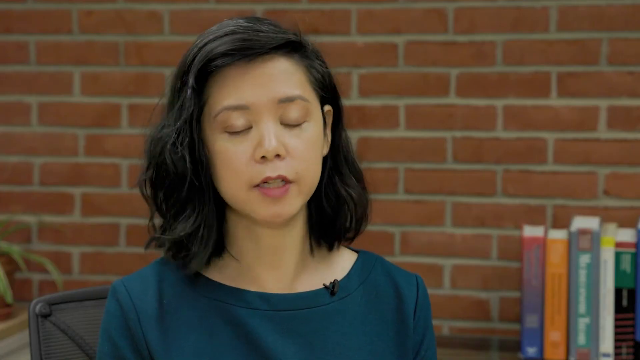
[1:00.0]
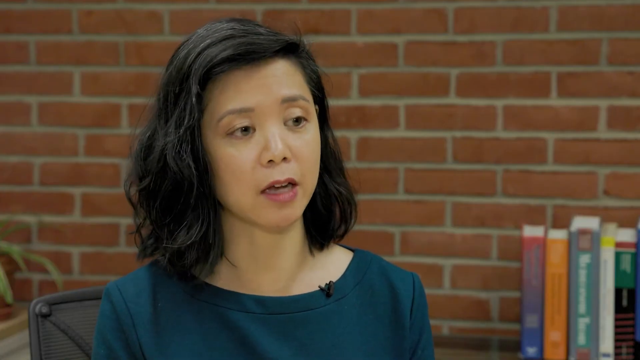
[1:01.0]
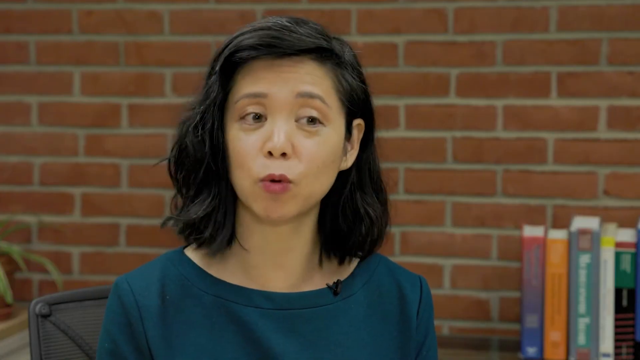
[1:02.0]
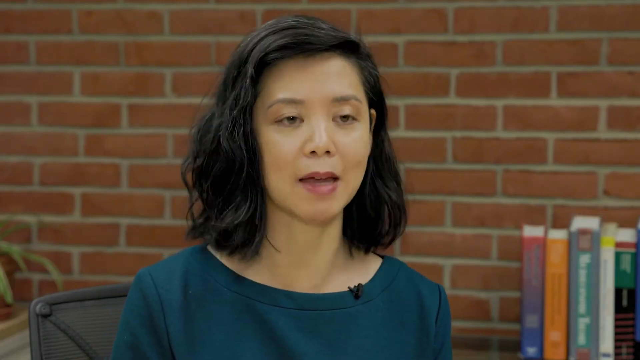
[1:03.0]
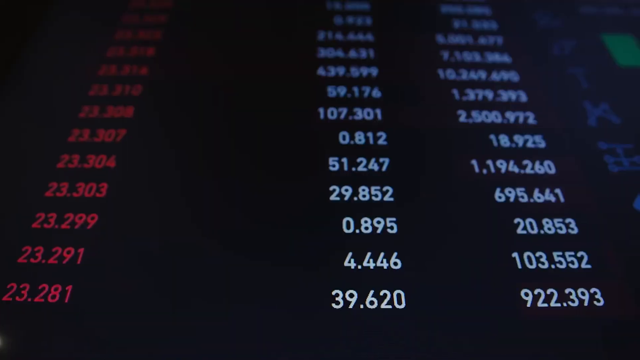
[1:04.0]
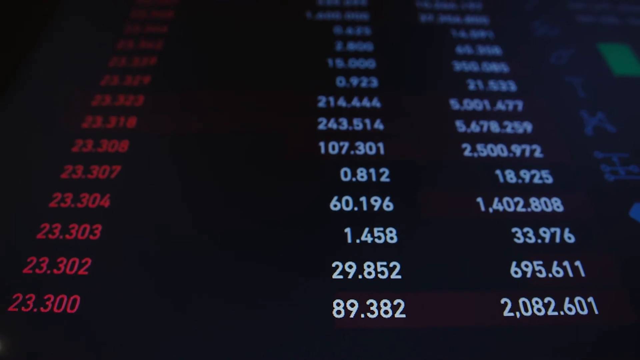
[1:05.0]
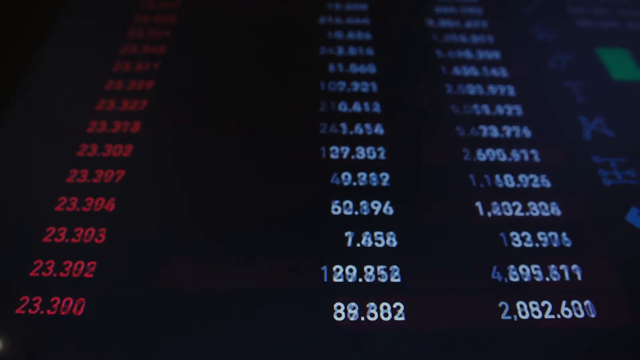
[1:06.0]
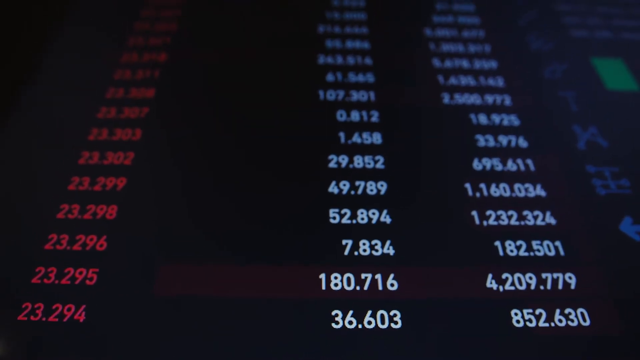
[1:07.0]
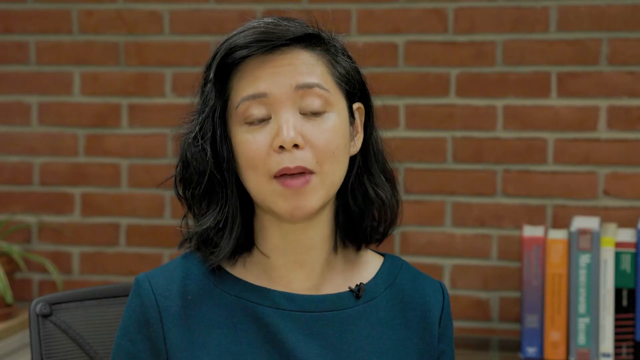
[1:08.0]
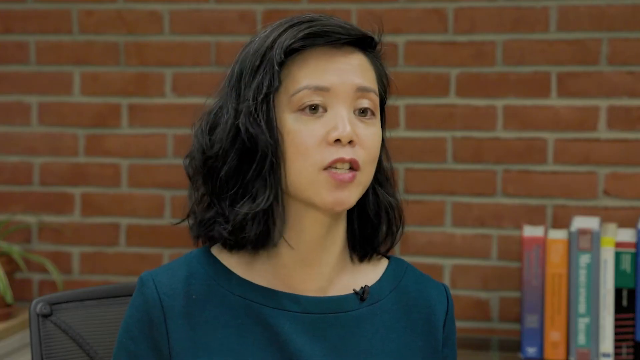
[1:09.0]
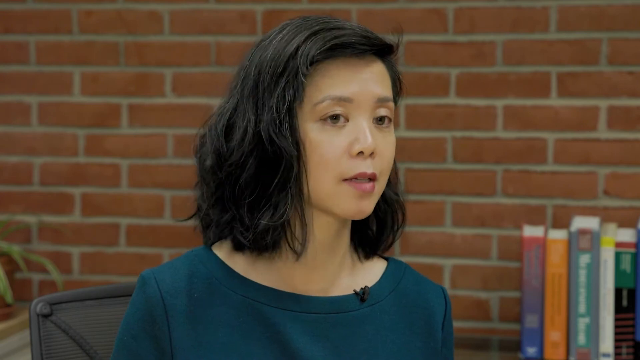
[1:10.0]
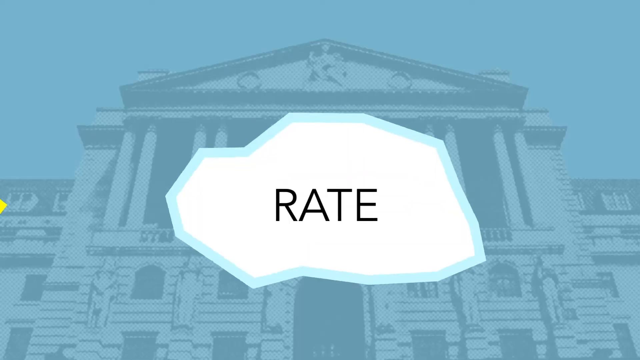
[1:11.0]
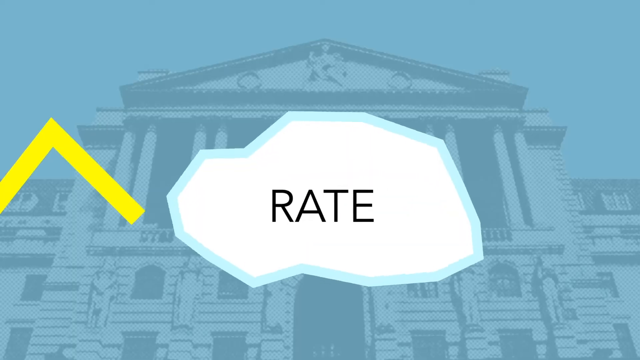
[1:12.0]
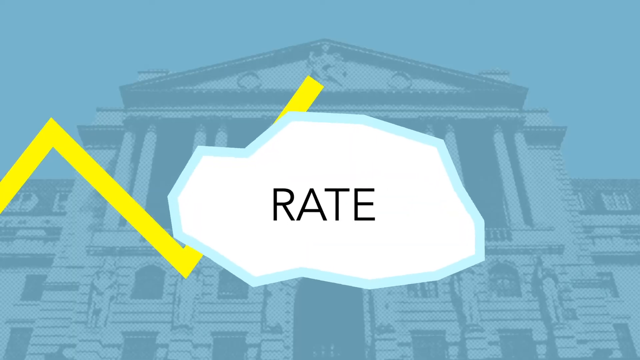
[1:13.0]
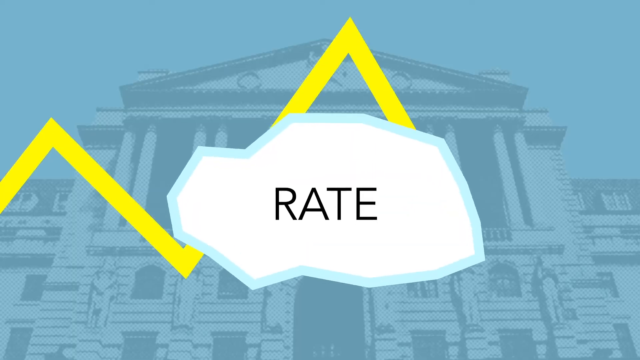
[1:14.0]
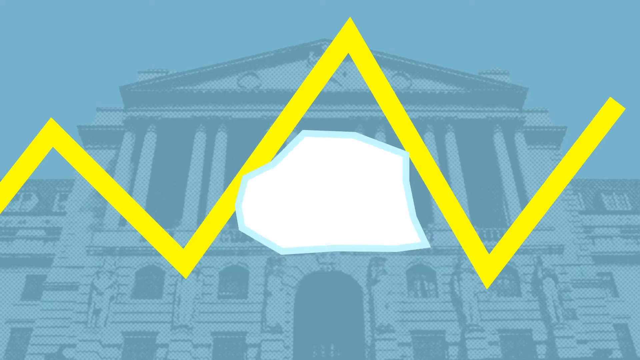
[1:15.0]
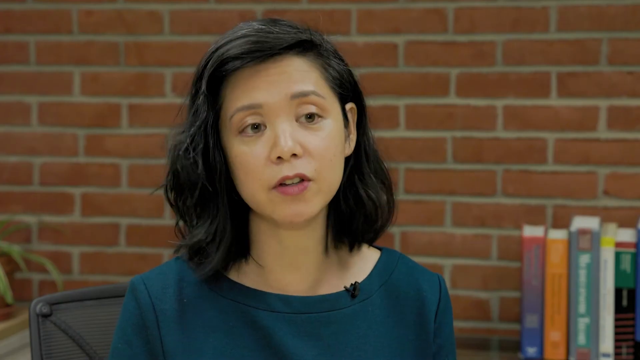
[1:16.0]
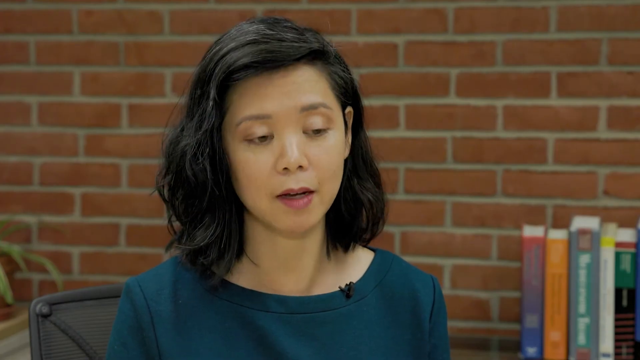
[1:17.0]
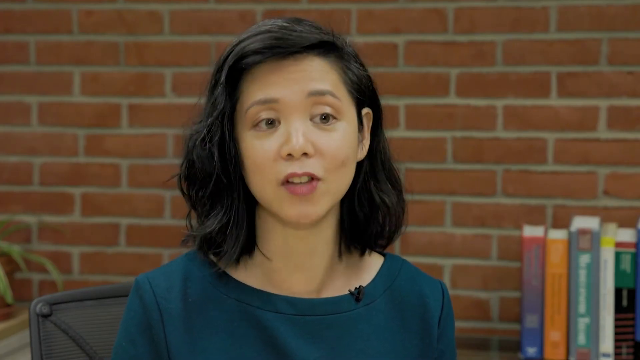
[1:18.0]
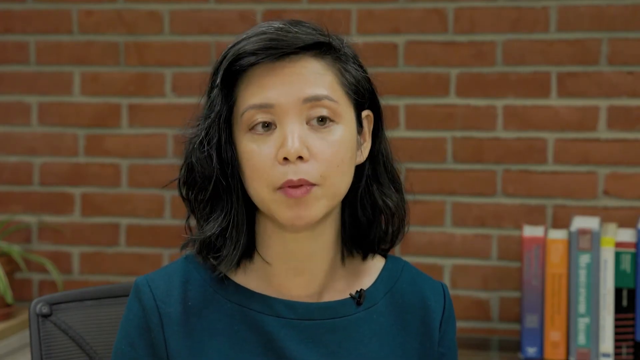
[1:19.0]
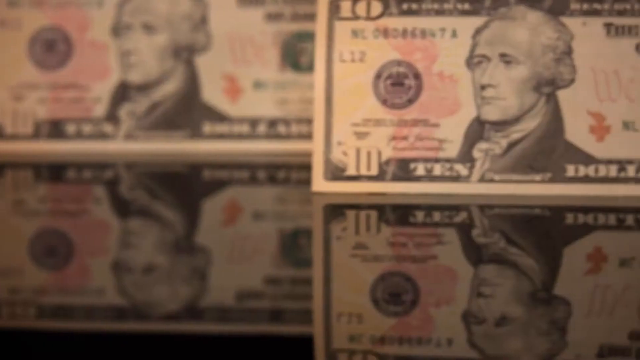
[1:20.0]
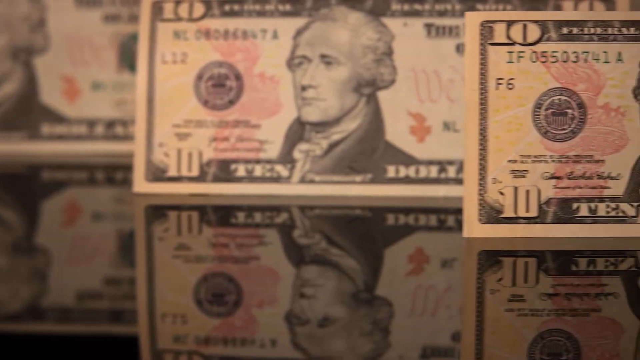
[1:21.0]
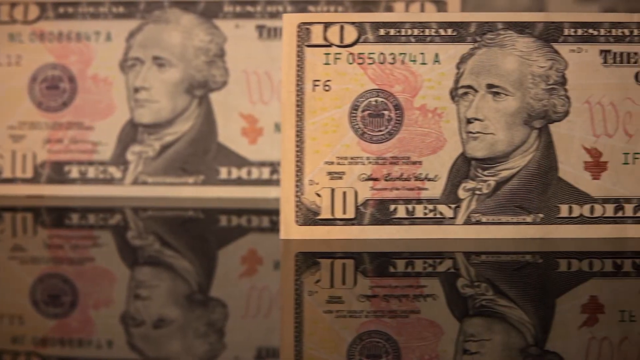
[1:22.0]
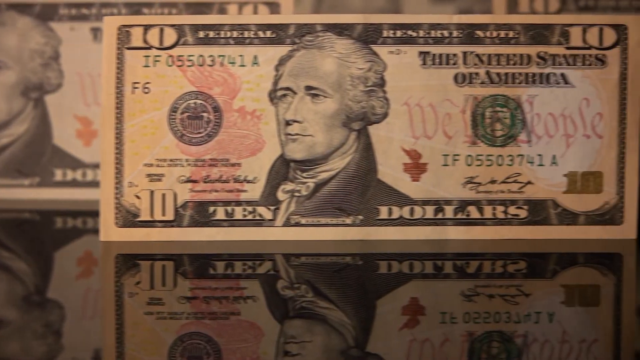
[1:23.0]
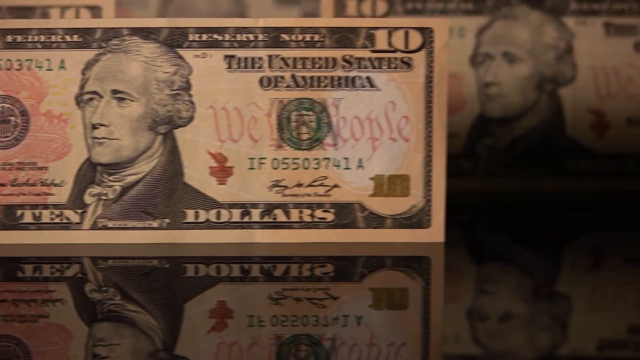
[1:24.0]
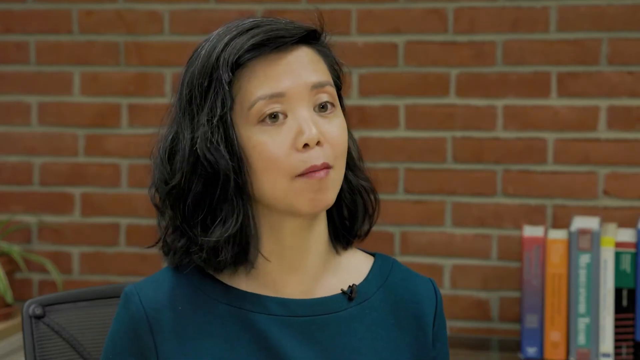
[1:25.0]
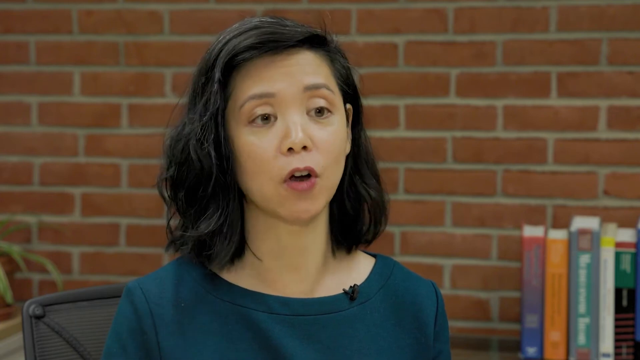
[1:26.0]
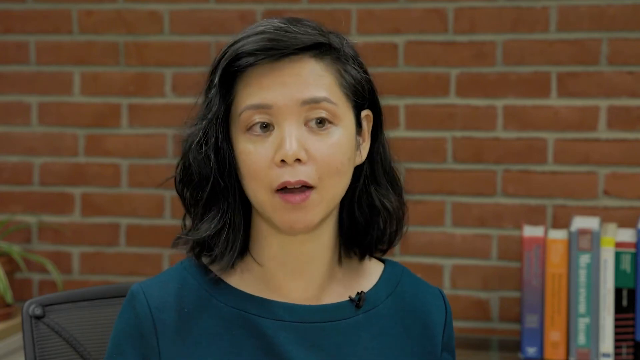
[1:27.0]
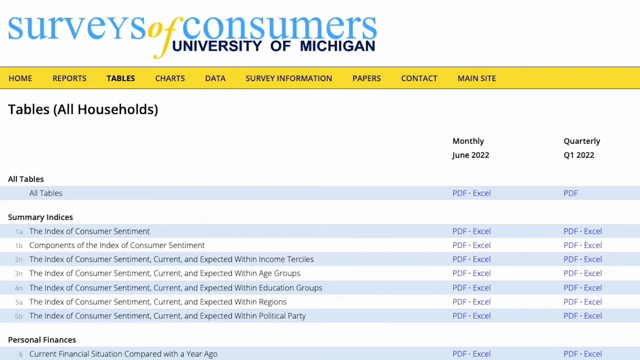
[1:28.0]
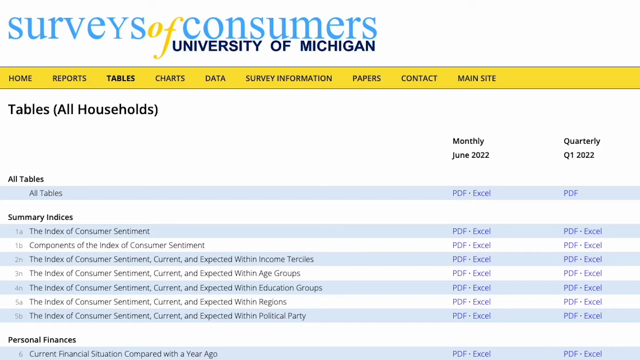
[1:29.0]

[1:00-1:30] A monitor is filled with numbers. At the top are figures such as 23.307, 23.304 and 23.303, continuing downward, shown in red; to their left are other numbers in blue. The screen shows these charts with various numbers and units. The video goes back to Director Joanne, then shows a screen with a rate in the middle and a yellow graph line that goes up and down. The focus returns to Director Joanne. Next, a screen full of nothing but $10 bills scrolls from left to right. At the very end, the video goes back to the surveys of consumers chart.